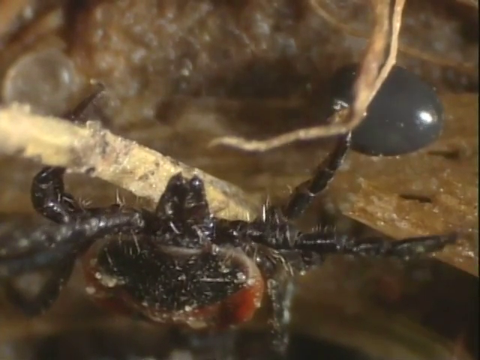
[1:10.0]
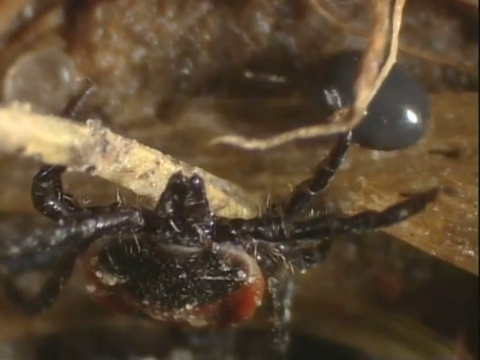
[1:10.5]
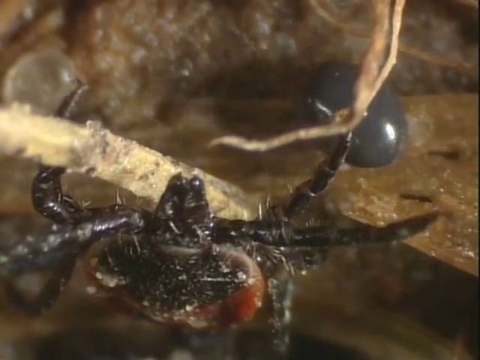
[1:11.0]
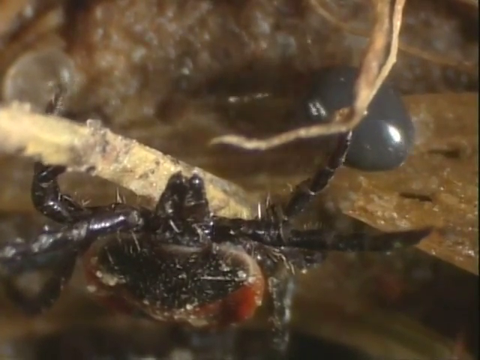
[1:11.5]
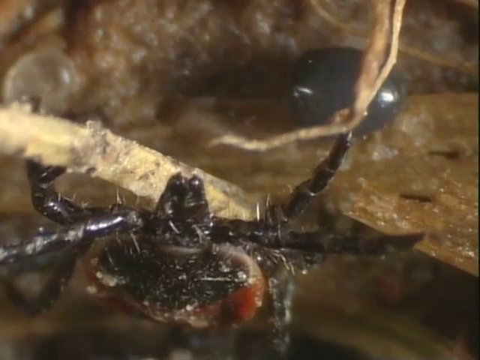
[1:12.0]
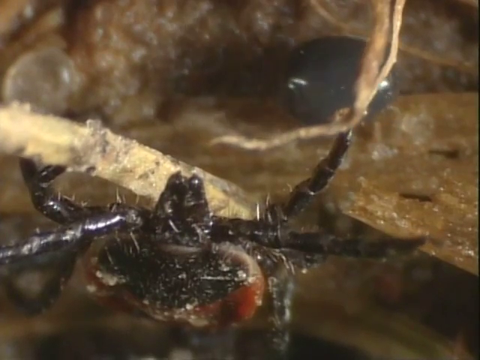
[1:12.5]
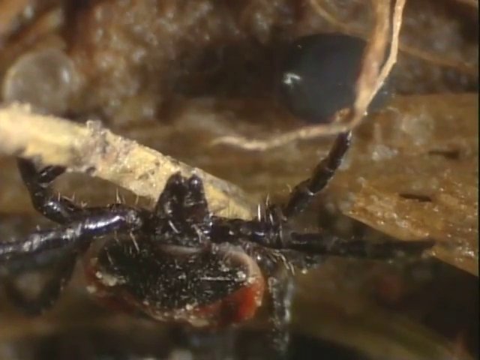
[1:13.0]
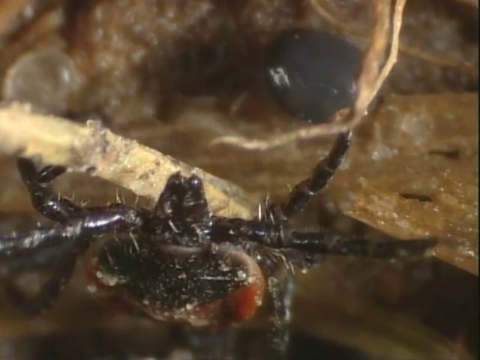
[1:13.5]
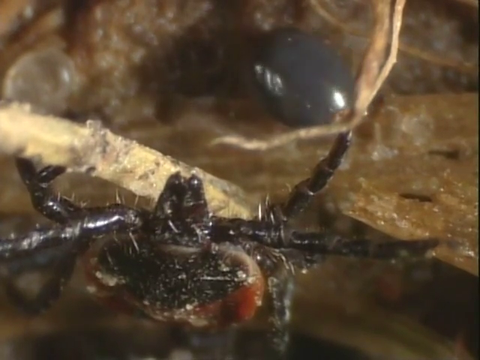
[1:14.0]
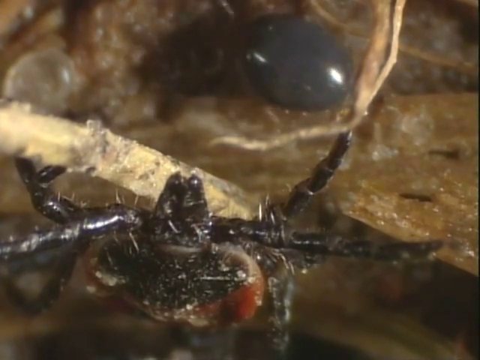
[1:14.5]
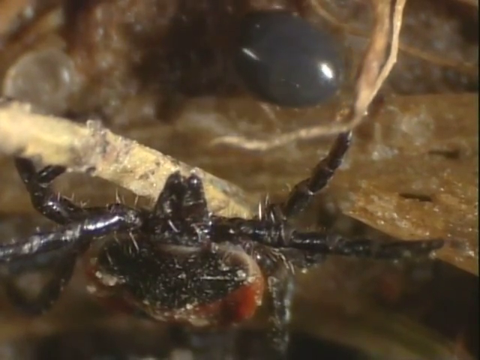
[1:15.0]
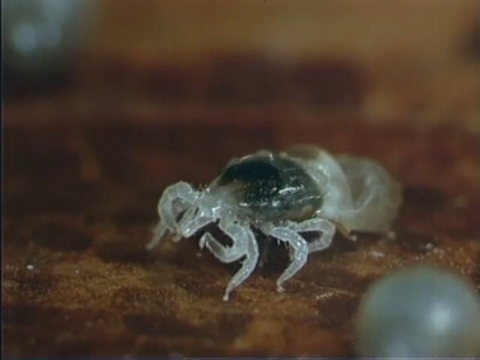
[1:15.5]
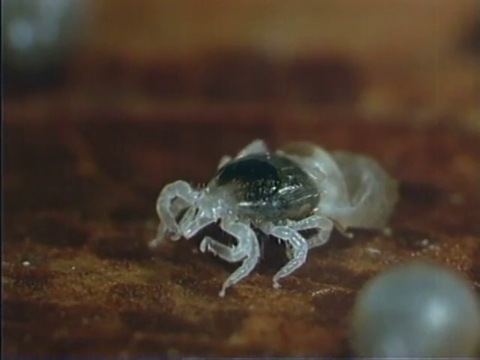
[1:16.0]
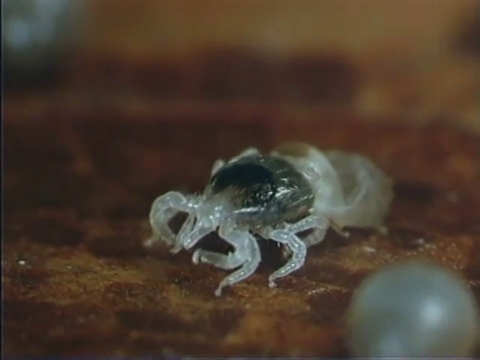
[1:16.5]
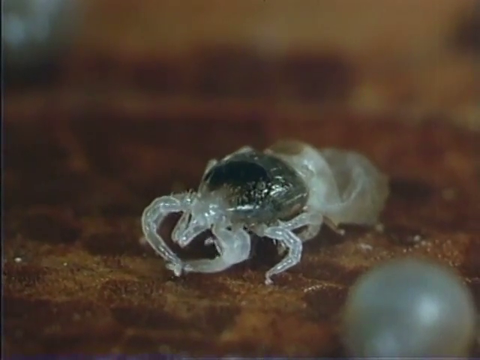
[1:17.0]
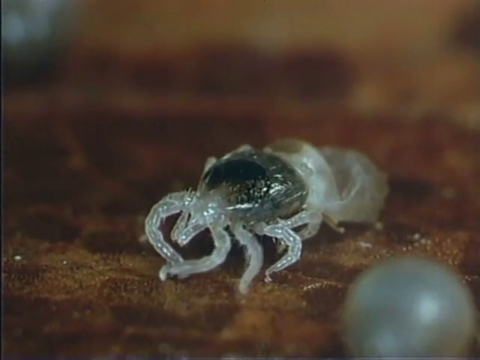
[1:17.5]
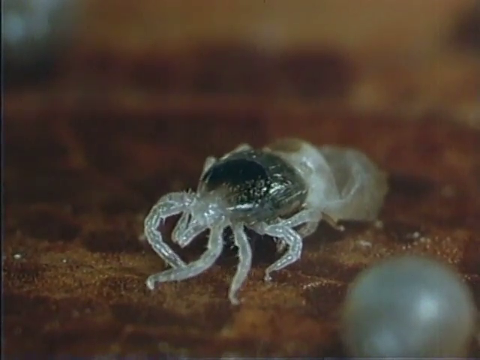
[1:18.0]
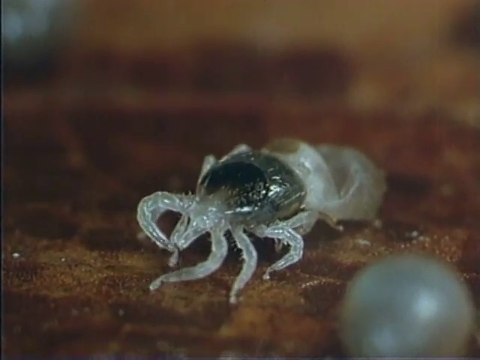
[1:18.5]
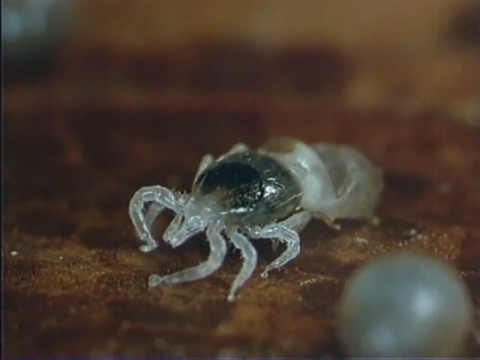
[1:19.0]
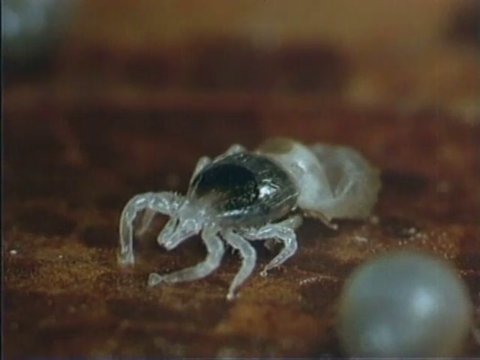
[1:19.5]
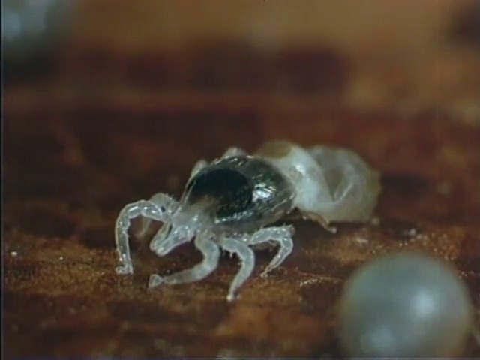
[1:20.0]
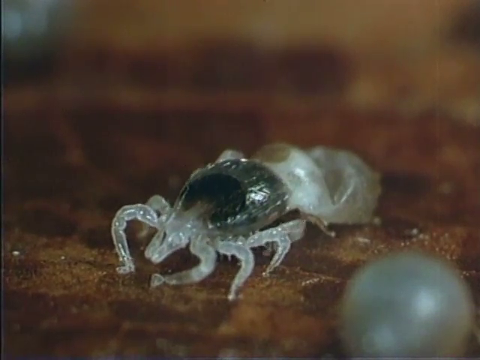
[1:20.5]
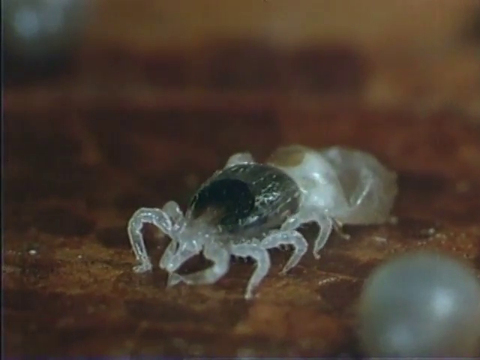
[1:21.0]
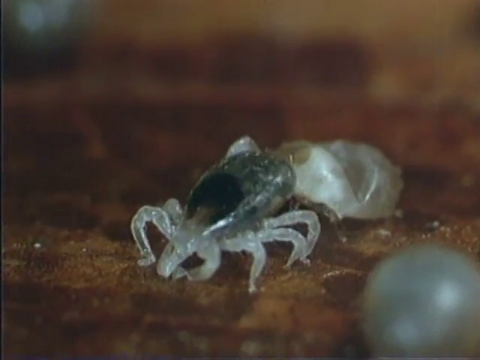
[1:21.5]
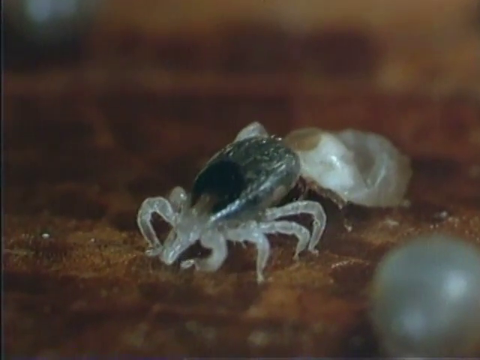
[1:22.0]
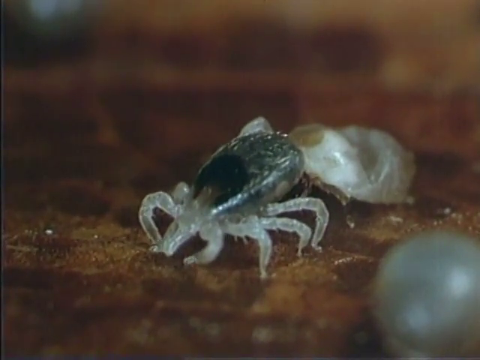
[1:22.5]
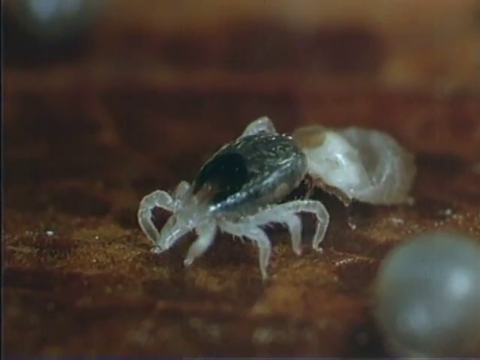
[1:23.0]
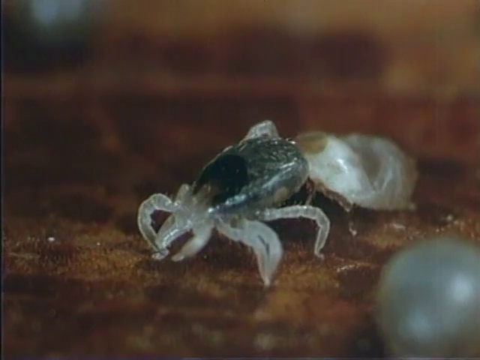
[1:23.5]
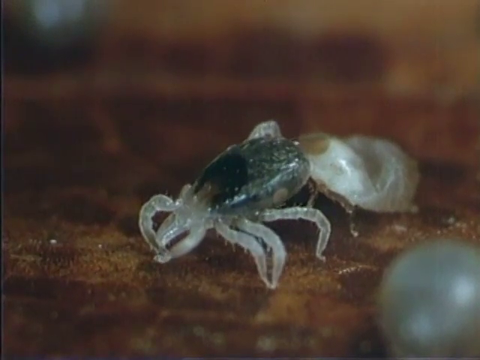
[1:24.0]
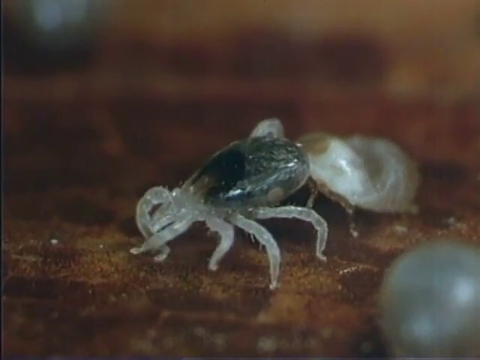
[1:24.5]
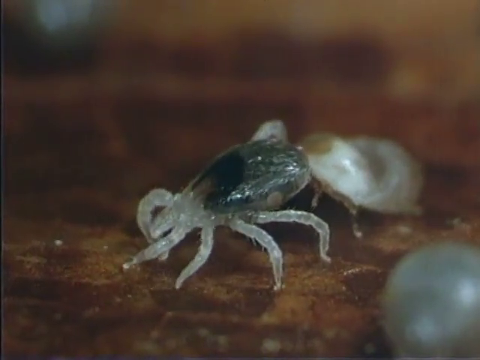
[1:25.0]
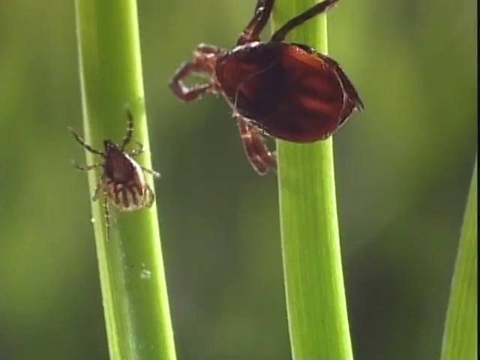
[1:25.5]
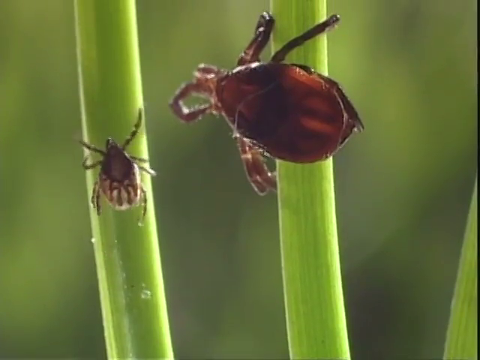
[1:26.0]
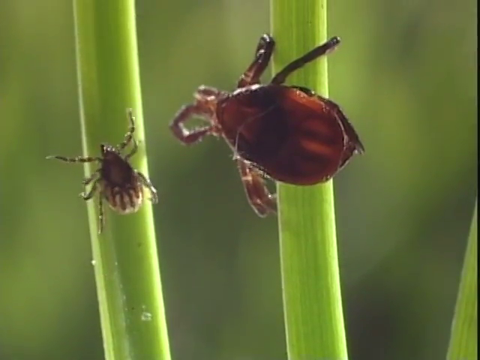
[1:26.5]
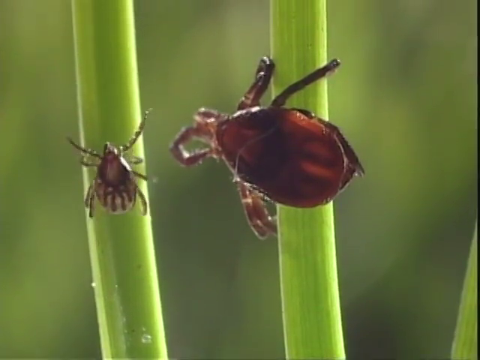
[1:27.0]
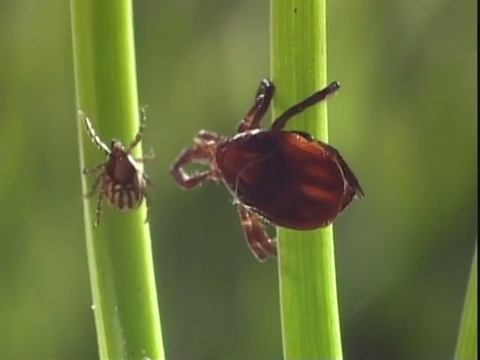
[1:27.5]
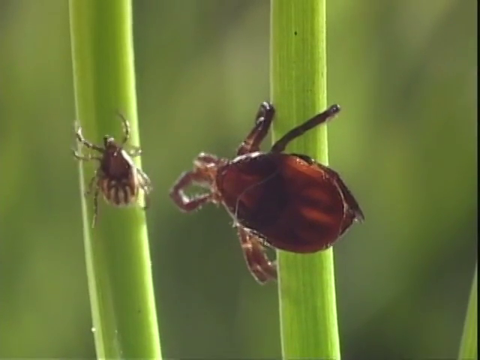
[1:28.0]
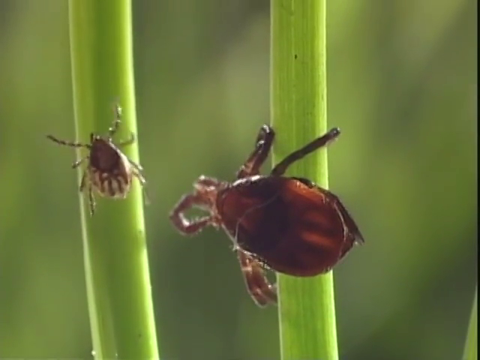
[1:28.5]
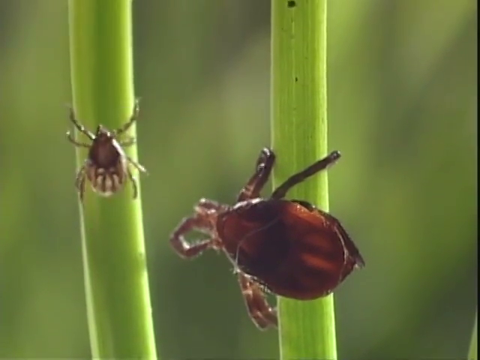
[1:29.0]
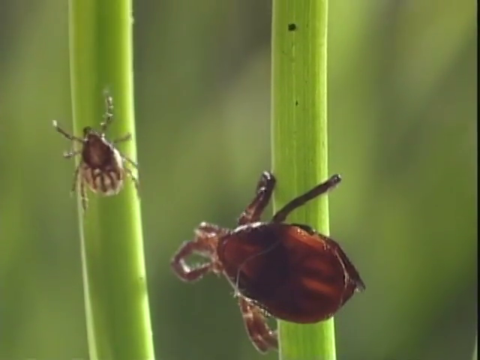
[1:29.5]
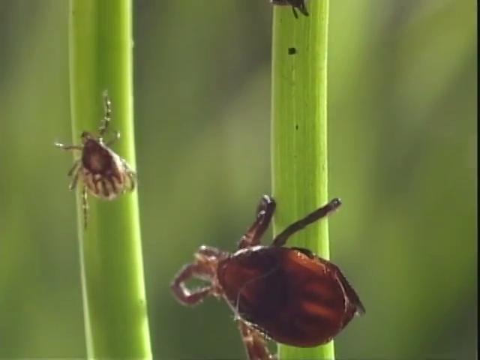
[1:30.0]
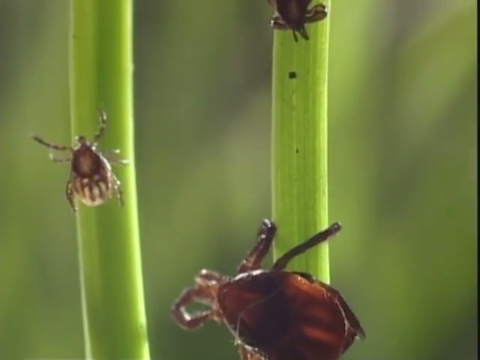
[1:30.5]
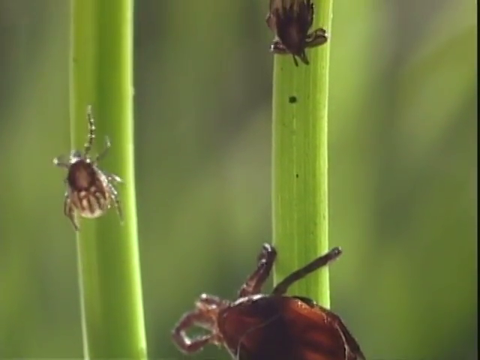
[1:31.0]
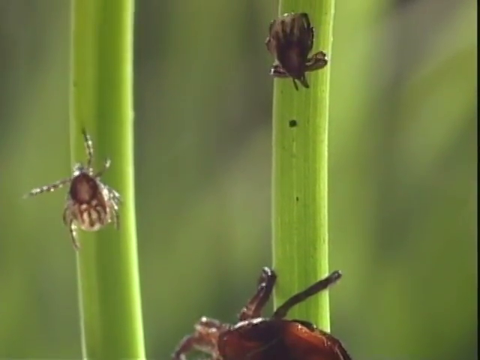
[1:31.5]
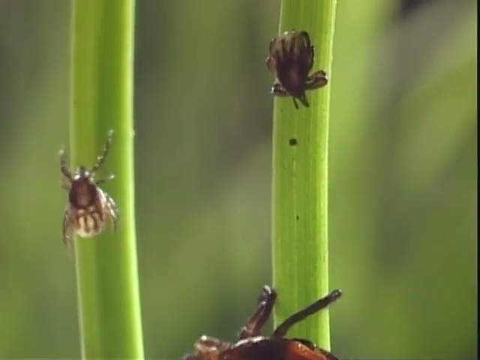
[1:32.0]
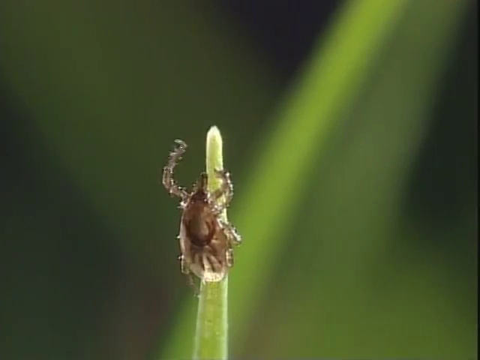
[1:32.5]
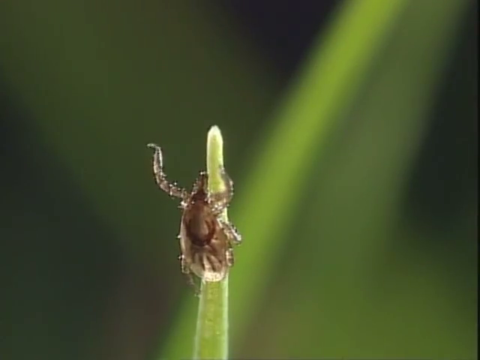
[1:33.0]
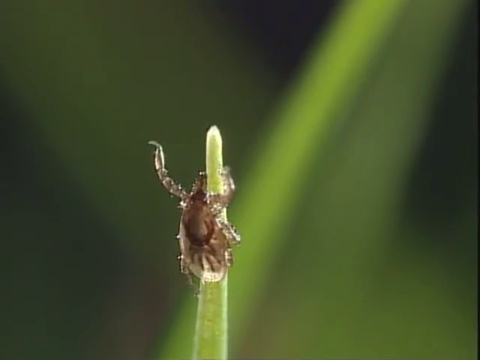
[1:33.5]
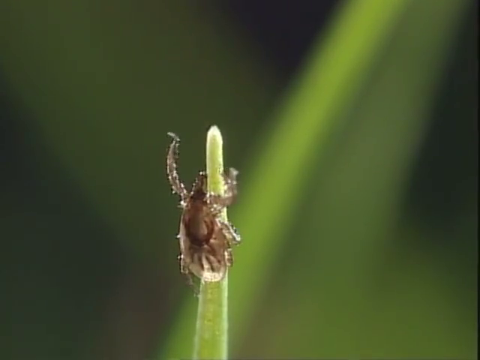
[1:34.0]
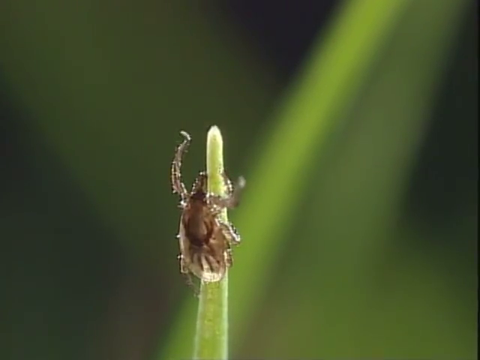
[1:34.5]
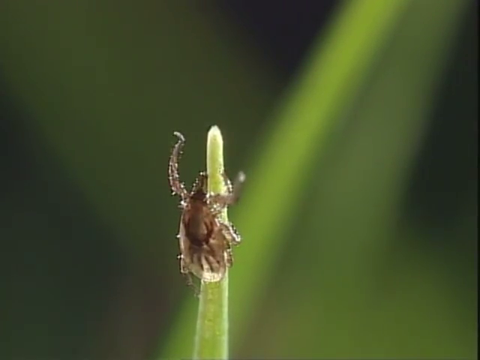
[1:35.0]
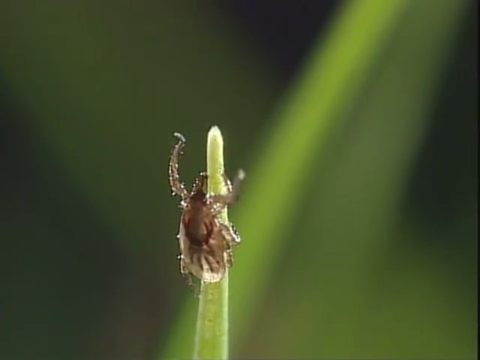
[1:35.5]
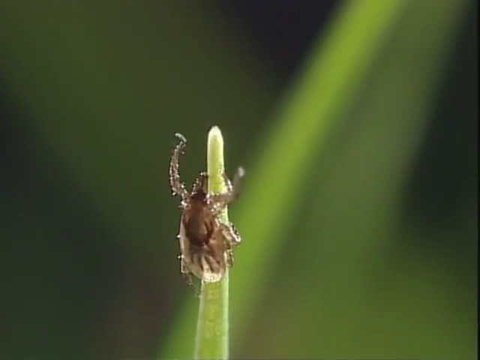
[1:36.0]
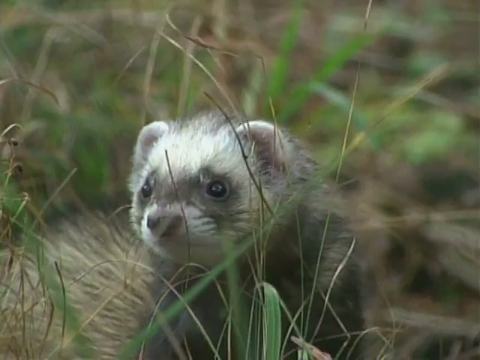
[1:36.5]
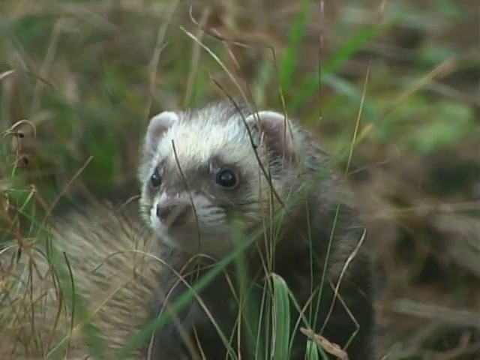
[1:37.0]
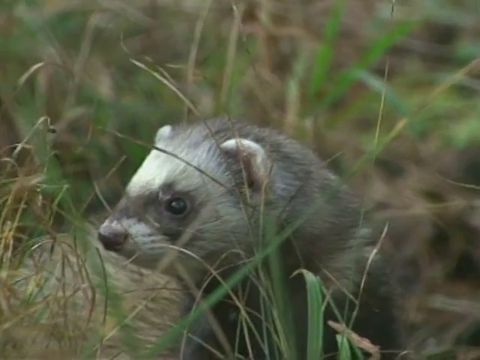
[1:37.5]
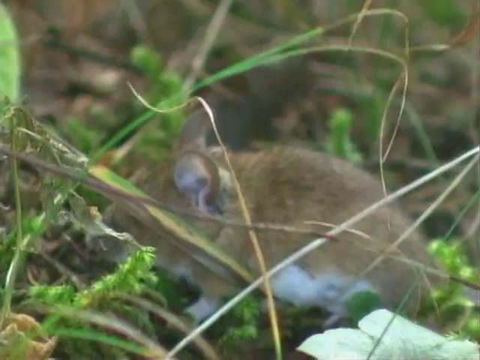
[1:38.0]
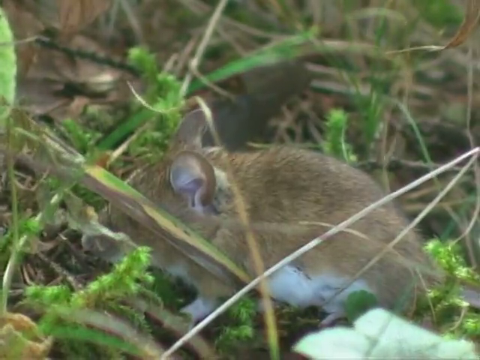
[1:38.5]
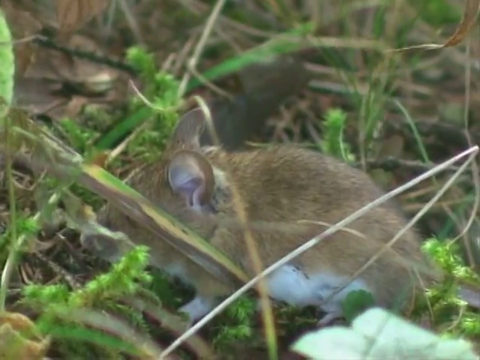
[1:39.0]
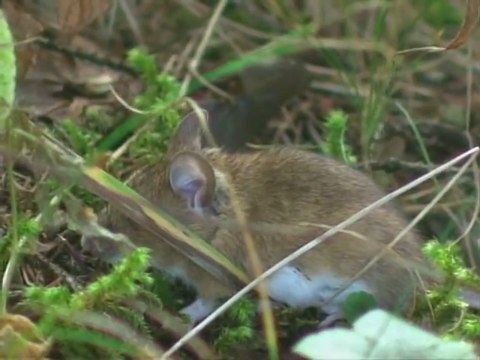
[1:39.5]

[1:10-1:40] In a microscopic view, what appear to be ticks in different life stages crawl on a host. The ticks are seen very up close, with even the hairs on their bodies visible, and younger ticks crawl around. A very transparent tick crawls on the surface, putting its head in and getting blood out of the host. Then ticks appear on what looks like bristly grass: a bigger tick and a smaller tick in different stages of life crawl up the grass, and at the very tip of the grass one puts its legs up. A ferret or weasel runs through the grass, followed by a rat and a shrew, as the various rodents run through the grass.